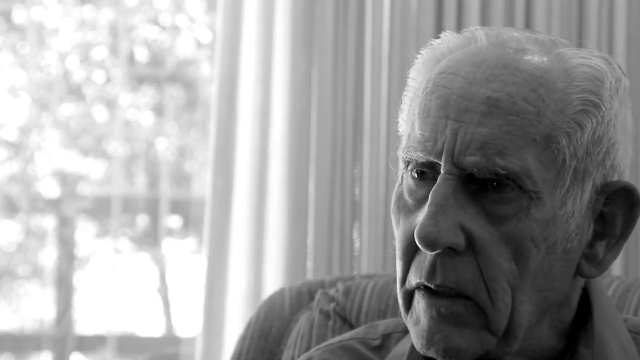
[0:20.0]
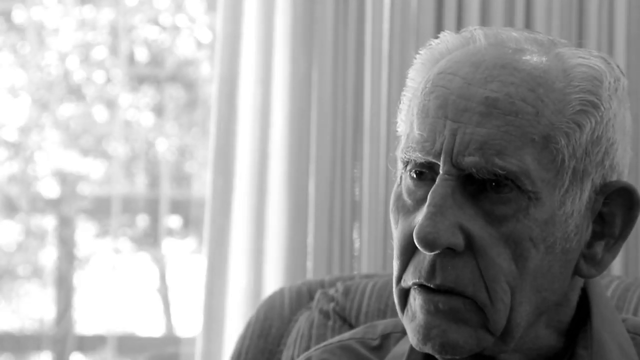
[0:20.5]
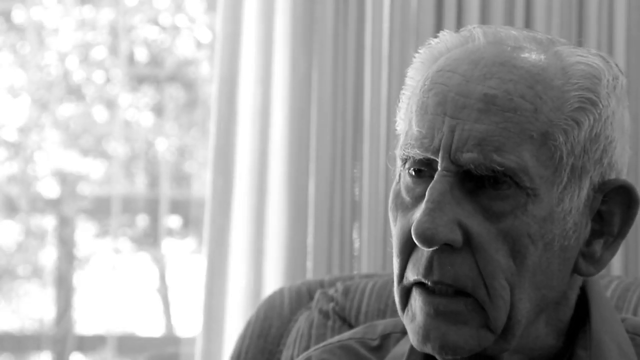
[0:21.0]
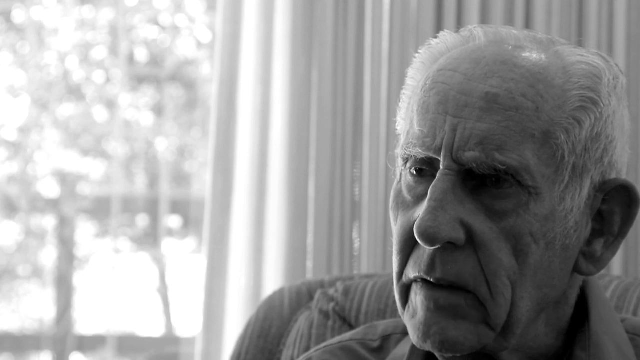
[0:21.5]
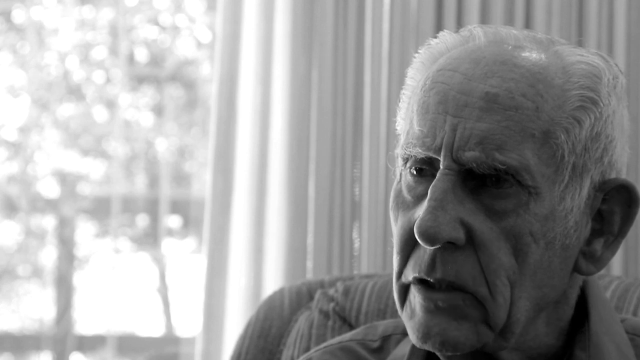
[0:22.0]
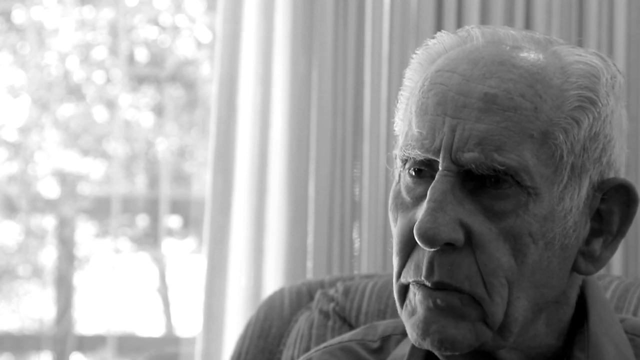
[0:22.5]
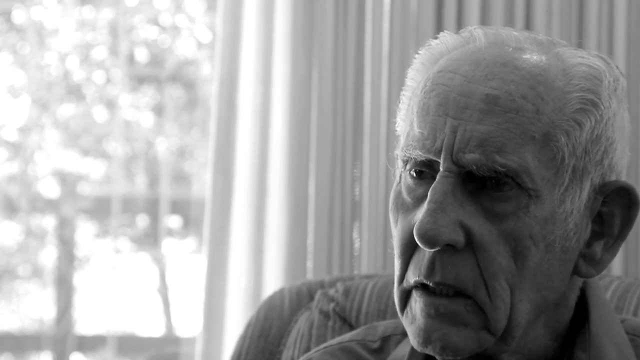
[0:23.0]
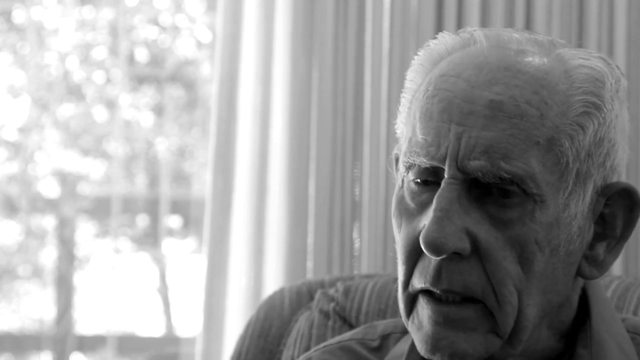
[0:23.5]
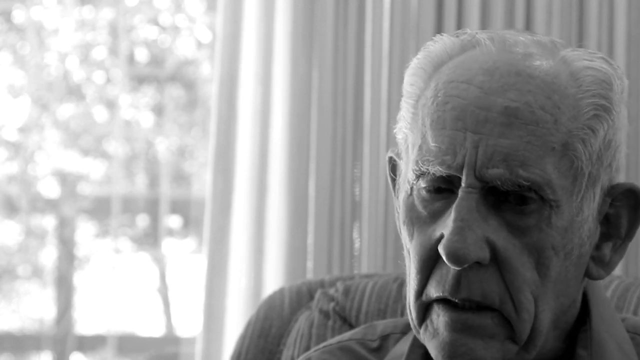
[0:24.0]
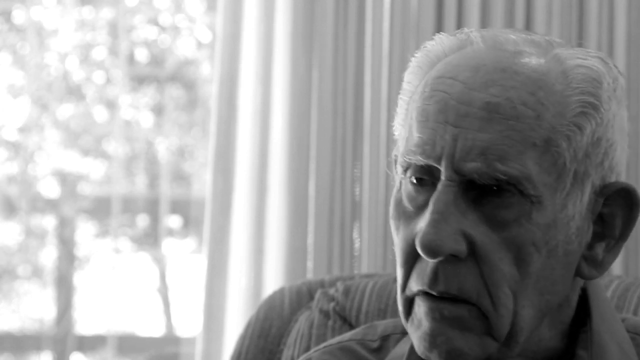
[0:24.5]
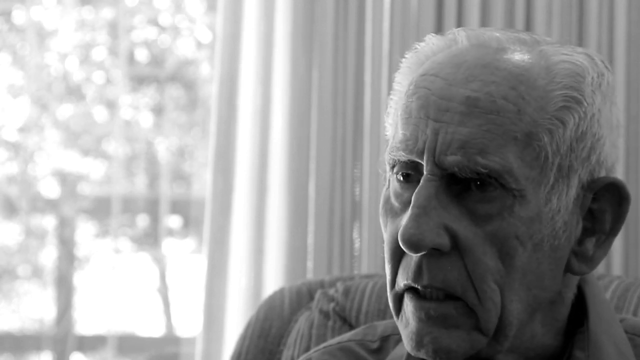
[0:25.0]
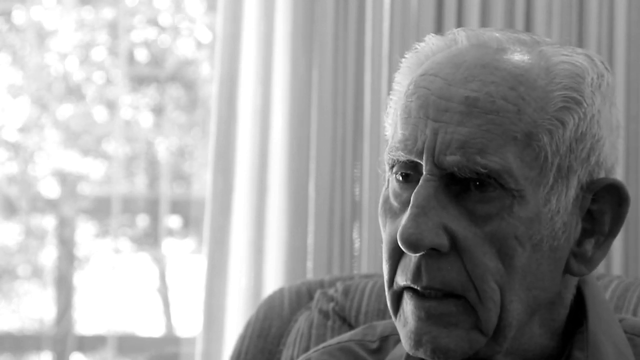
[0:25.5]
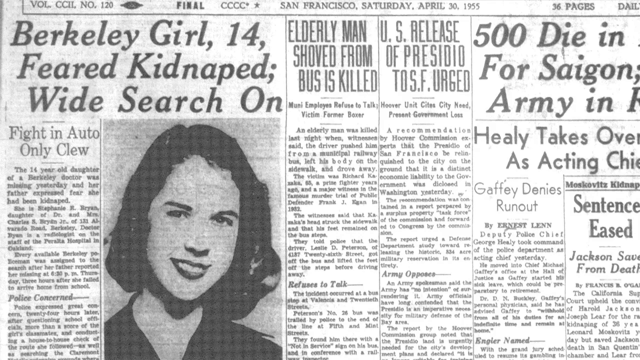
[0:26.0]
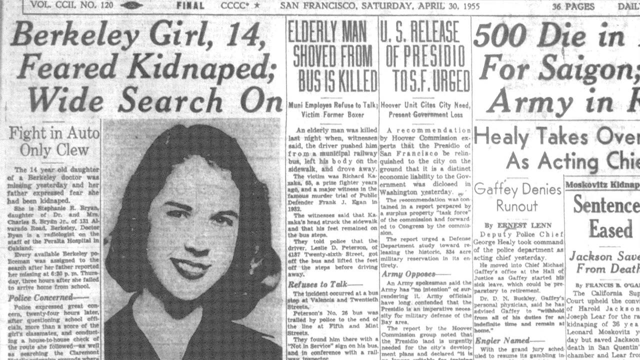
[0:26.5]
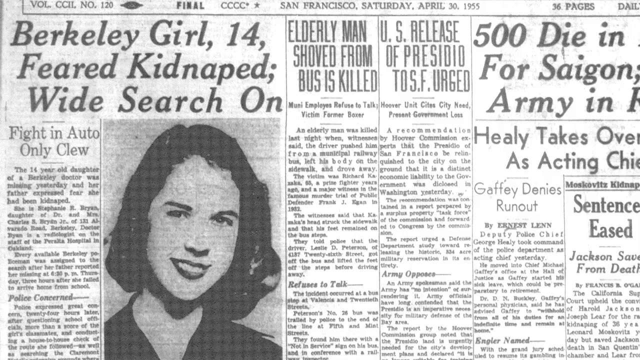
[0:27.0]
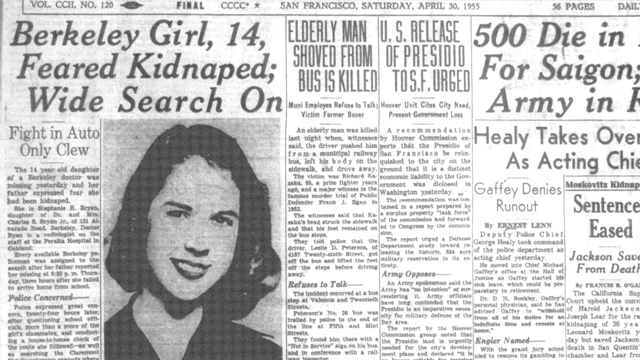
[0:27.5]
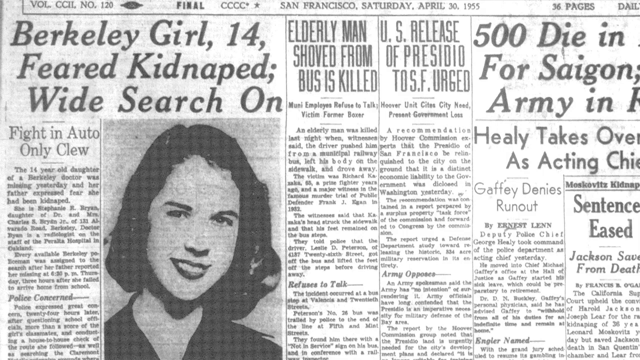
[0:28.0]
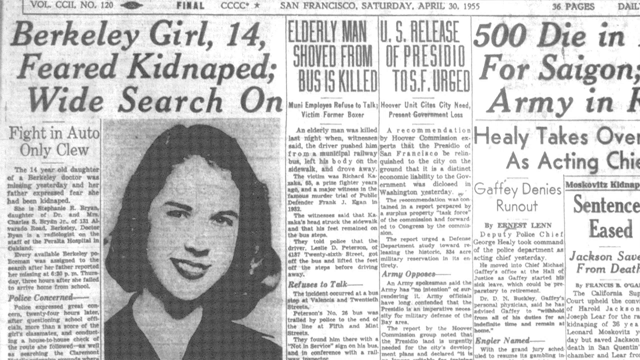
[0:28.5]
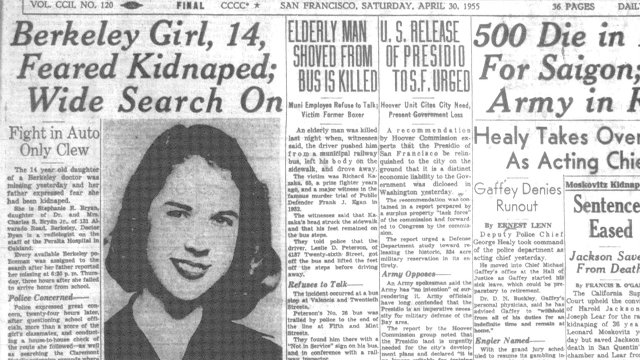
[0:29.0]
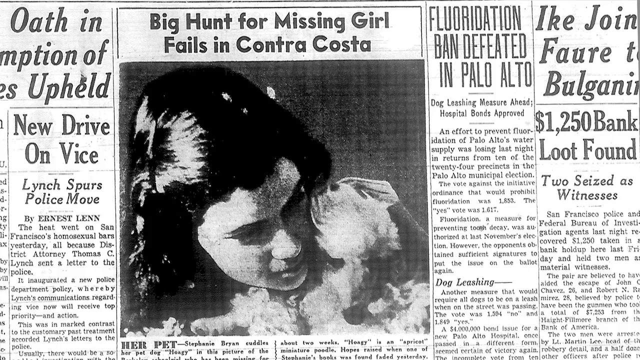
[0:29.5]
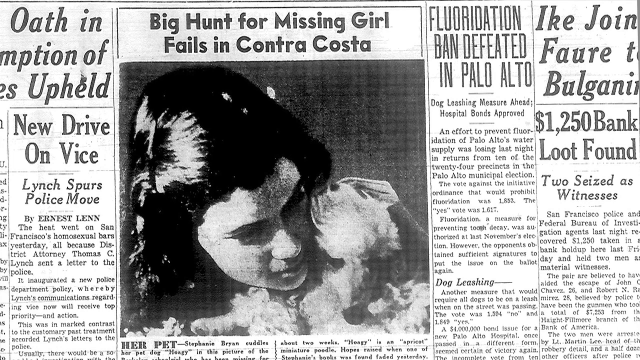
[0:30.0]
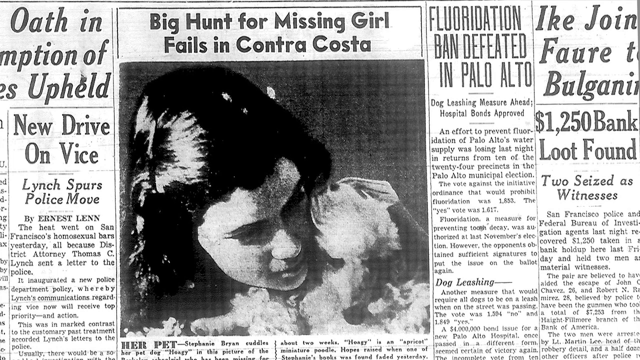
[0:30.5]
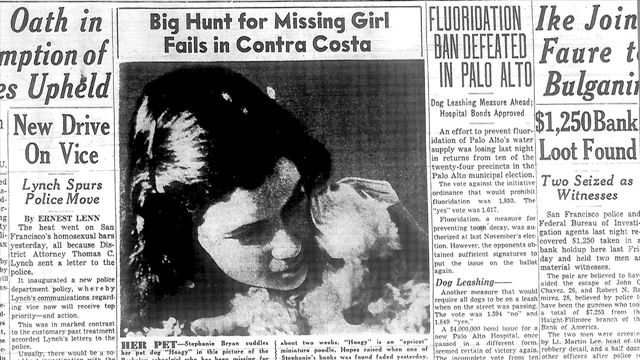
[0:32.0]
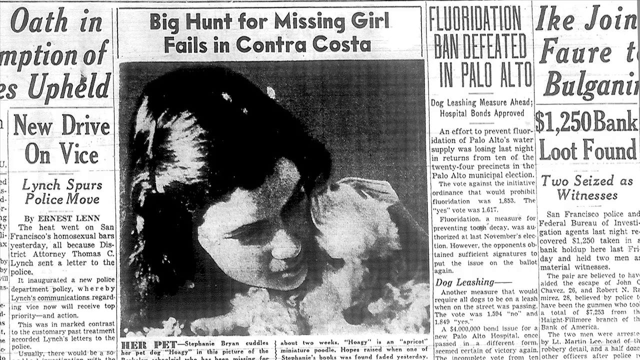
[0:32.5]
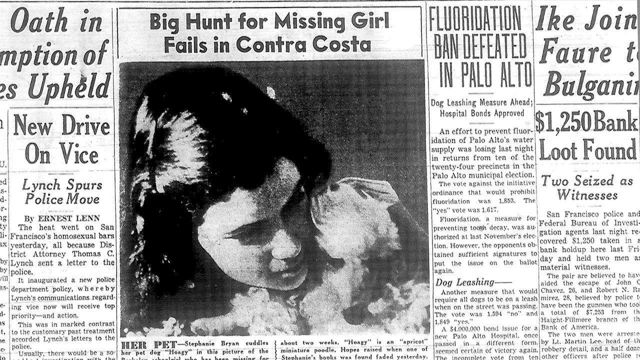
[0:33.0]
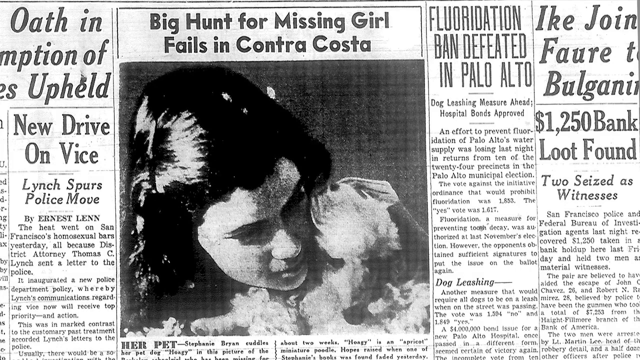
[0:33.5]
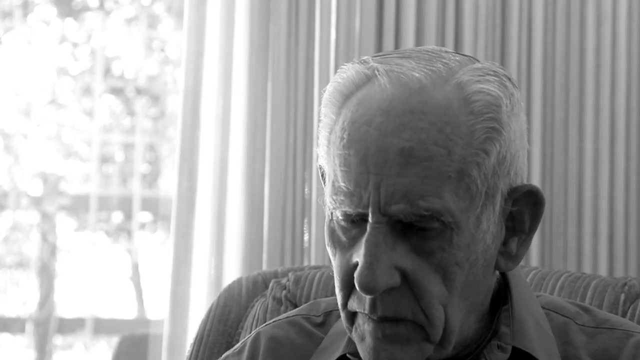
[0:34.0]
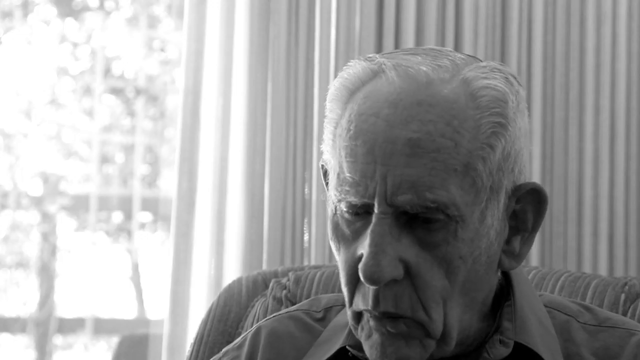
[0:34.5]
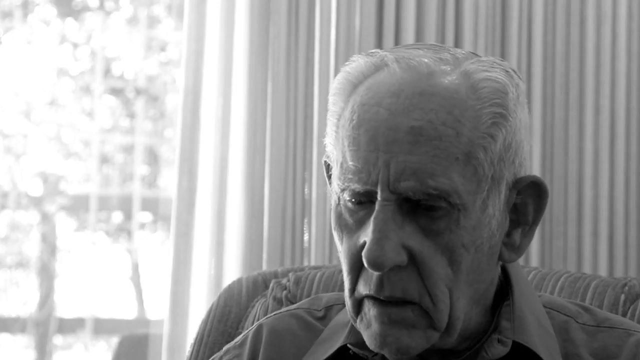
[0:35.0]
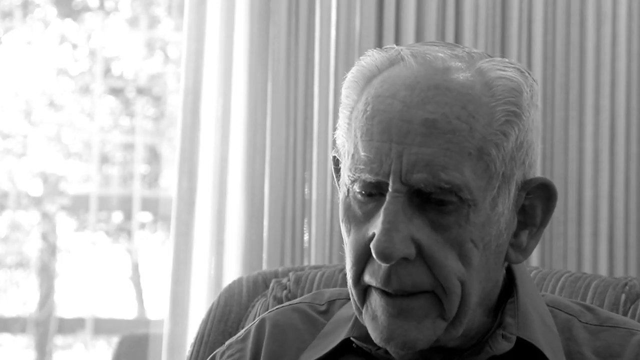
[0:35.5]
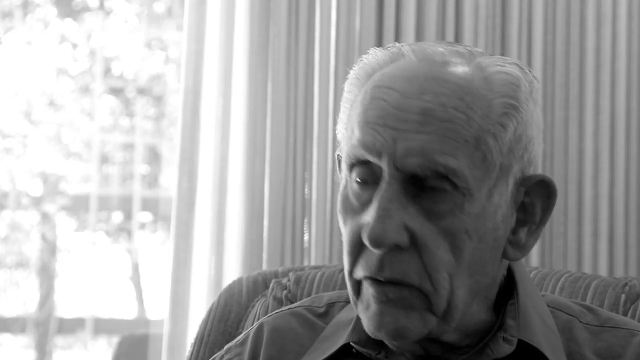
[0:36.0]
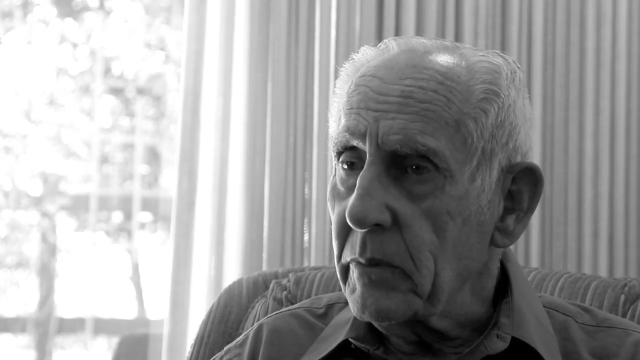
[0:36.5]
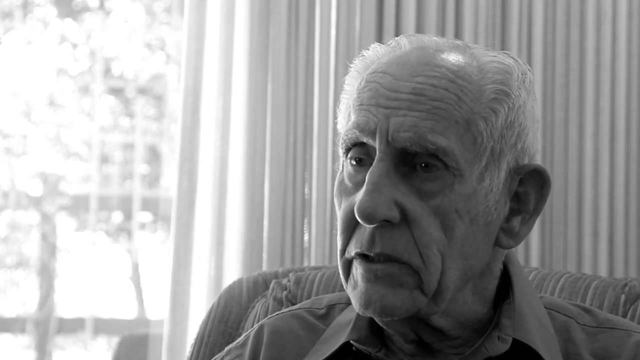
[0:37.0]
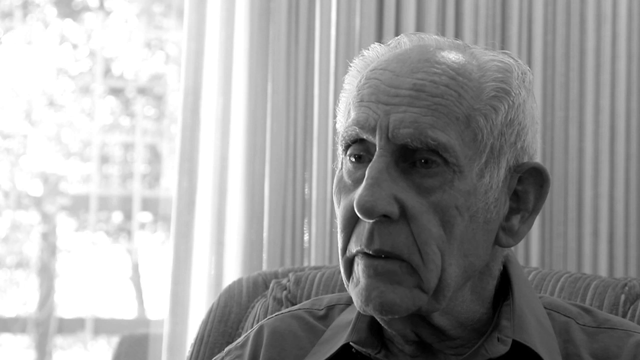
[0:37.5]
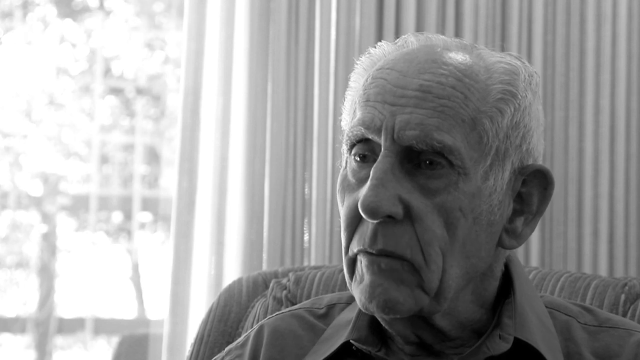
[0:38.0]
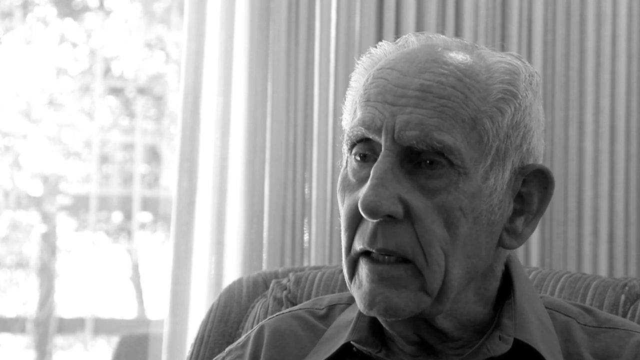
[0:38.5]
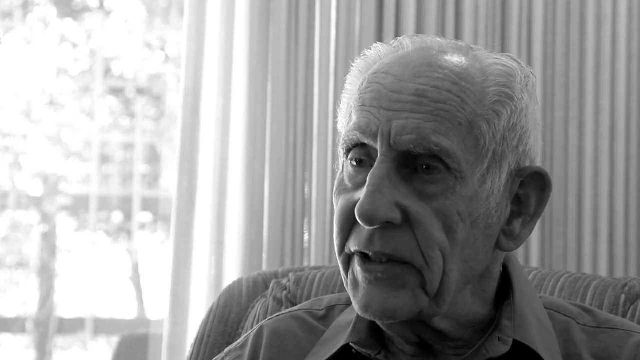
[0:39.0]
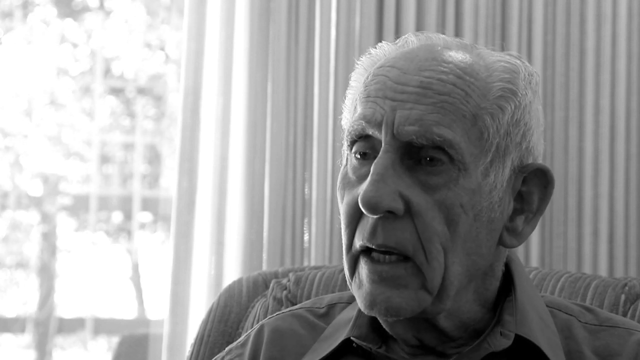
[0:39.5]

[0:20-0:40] The old man continues in conversation in the same room as before. A newspaper from San Francisco dated Saturday 30th of April, 1955, is shown, with the main headline "Berkeley girl, 14 feared kidnapped, wide search on" and a photo of a dark-haired teenager wearing lipstick, apparently the missing girl. Other headlines concern a man being shoved from a bus and killed, with the bus driver accused in relation to it; the Vietnam War, with 500 people dead in Saigon; and George Healey becoming acting commander of the San Francisco Police Department. The missing 14-year-old girl is identified as Stephanie R Bryan, the daughter of a doctor. Another newspaper headline follows about a hunt for Stephanie Bryan in Contra Costa failing. The view then pans back to the old man talking.